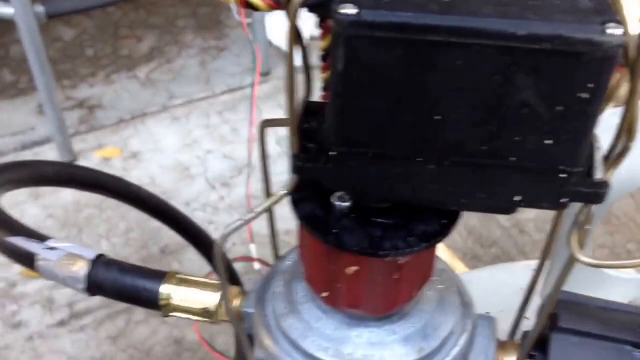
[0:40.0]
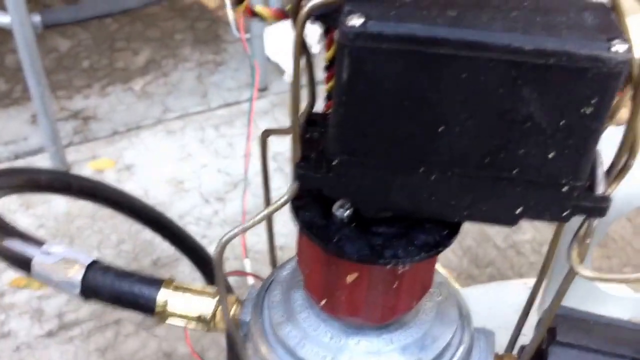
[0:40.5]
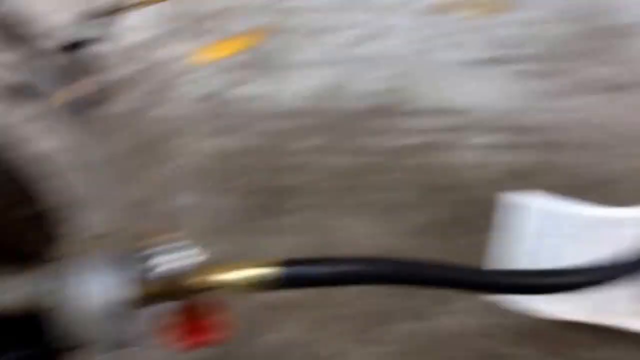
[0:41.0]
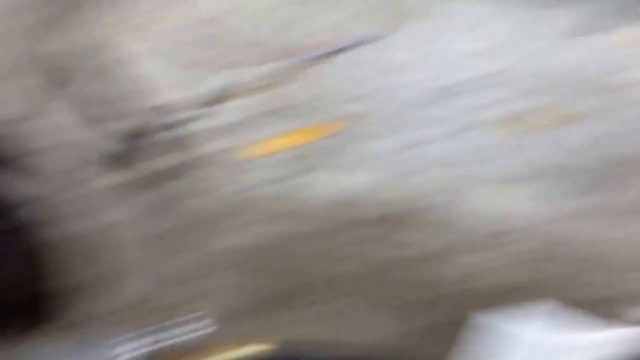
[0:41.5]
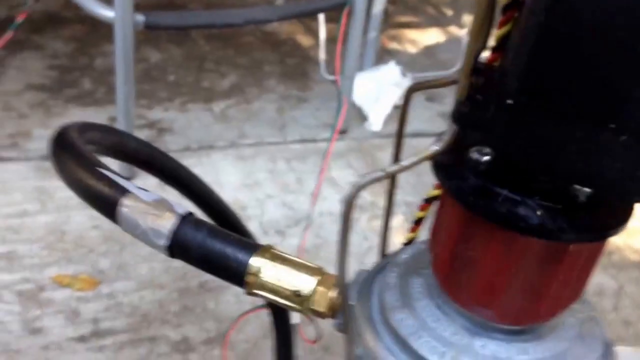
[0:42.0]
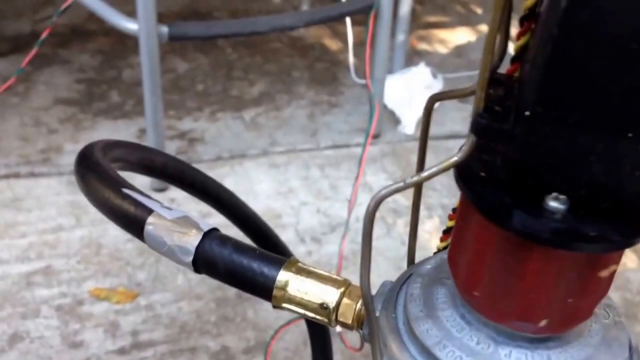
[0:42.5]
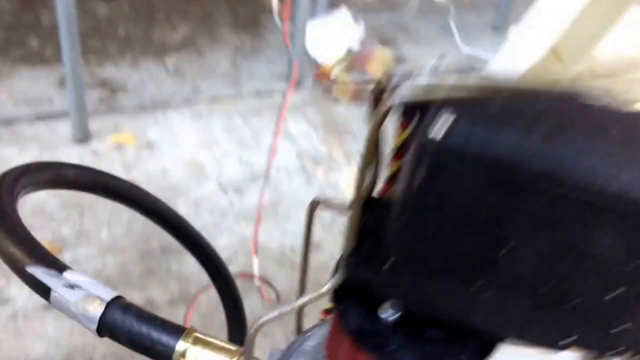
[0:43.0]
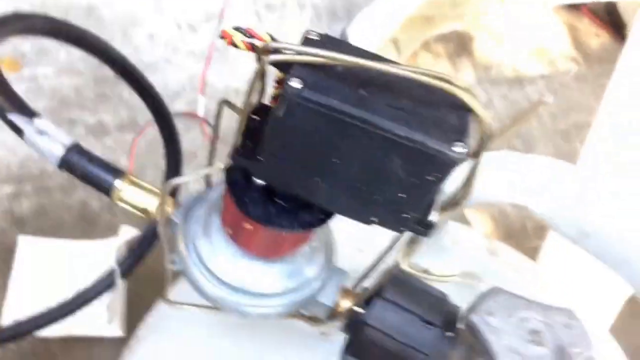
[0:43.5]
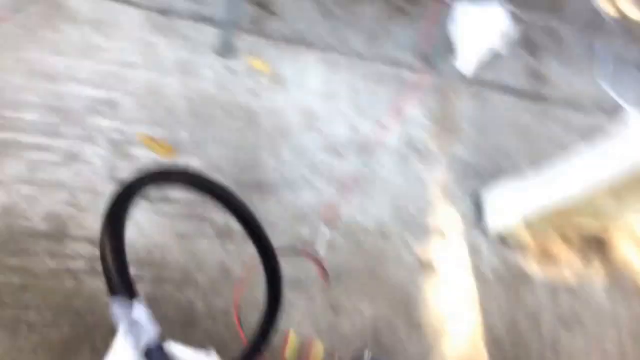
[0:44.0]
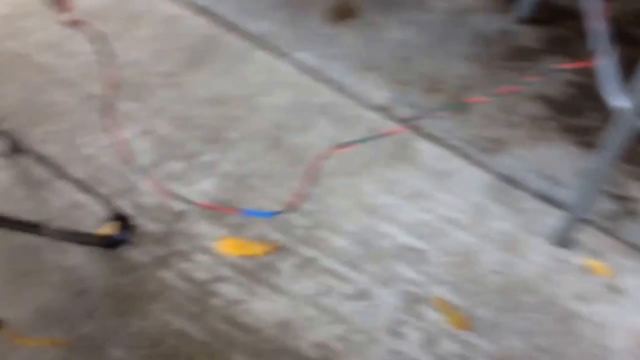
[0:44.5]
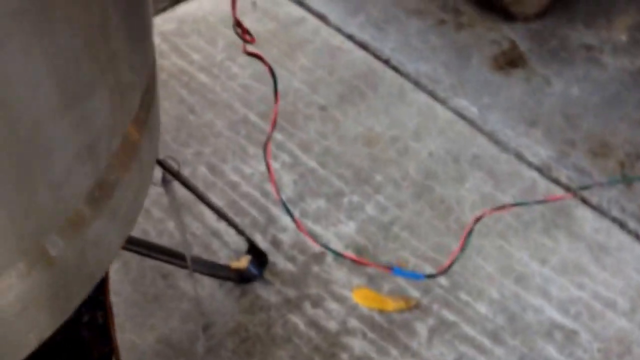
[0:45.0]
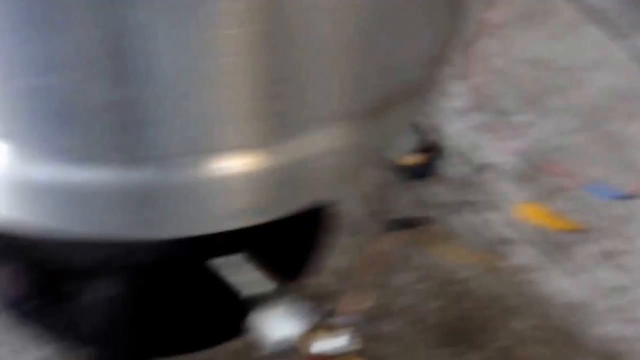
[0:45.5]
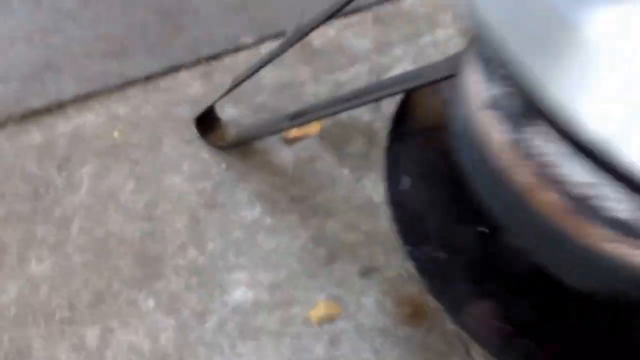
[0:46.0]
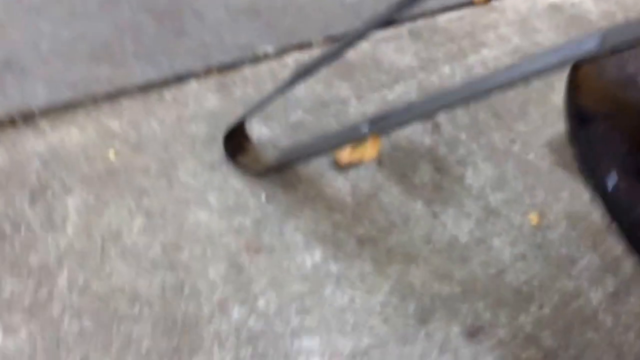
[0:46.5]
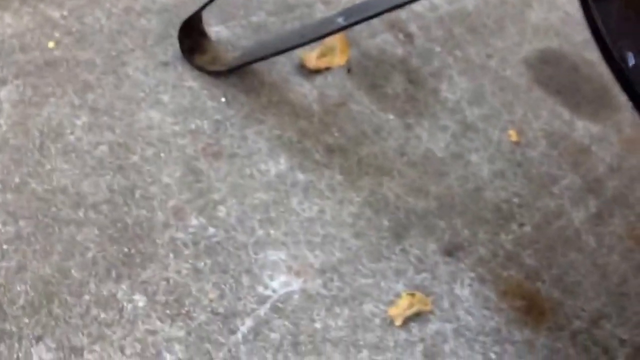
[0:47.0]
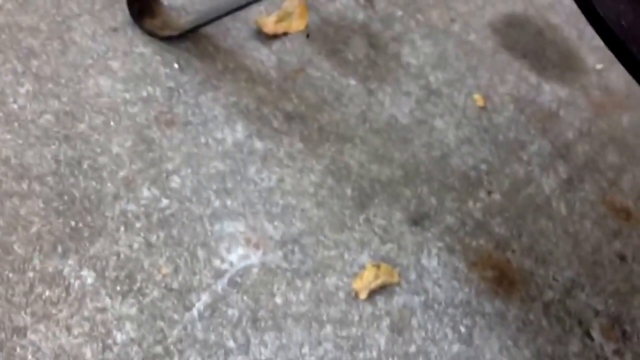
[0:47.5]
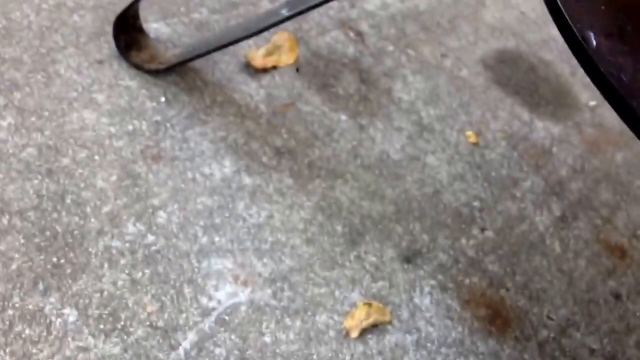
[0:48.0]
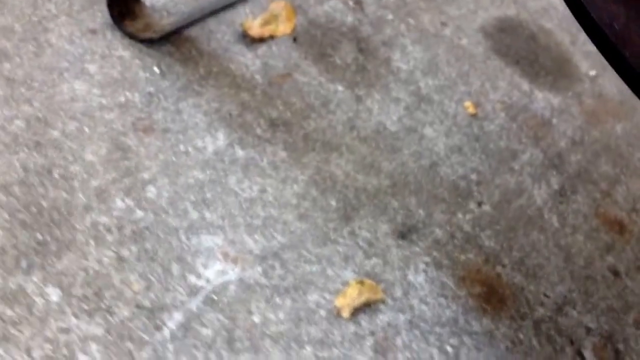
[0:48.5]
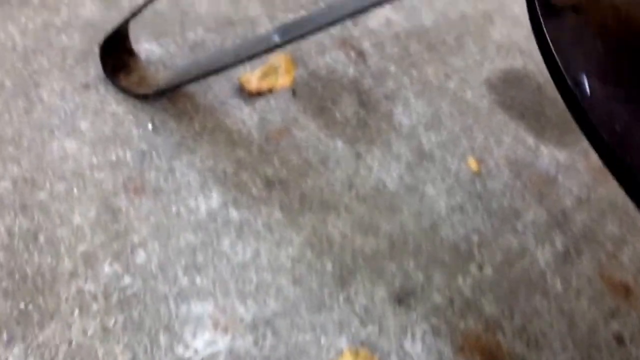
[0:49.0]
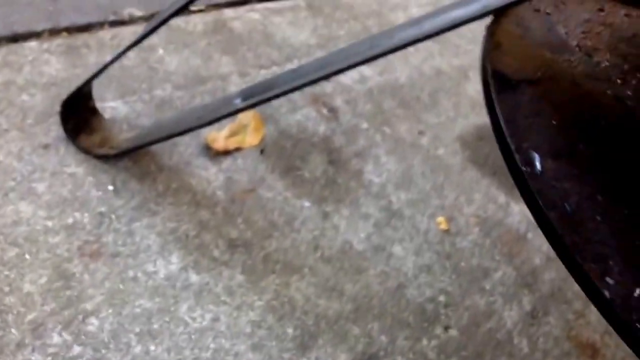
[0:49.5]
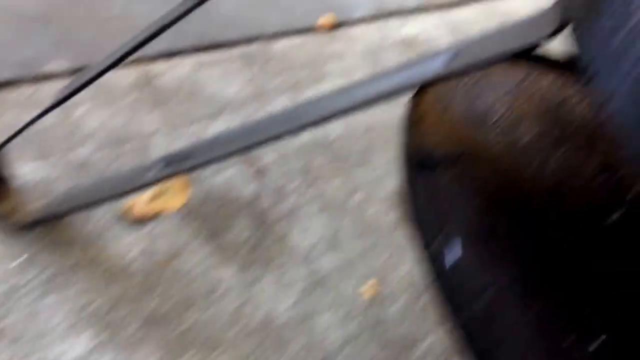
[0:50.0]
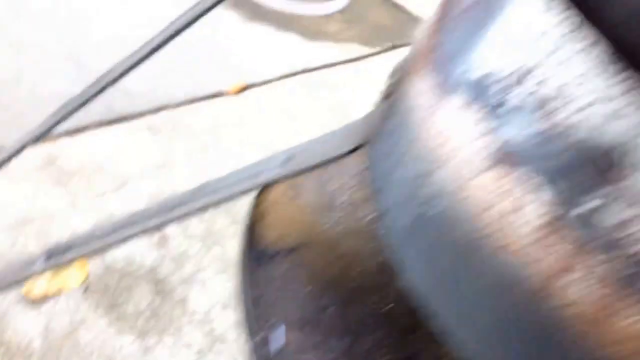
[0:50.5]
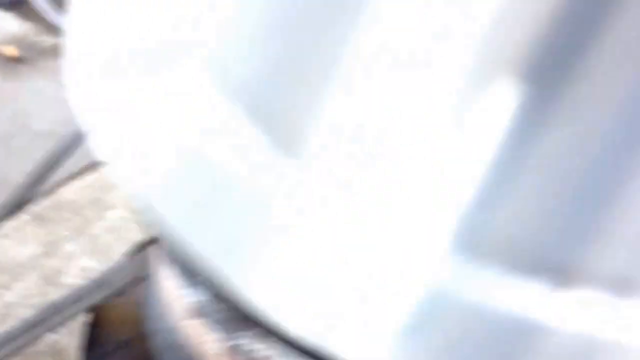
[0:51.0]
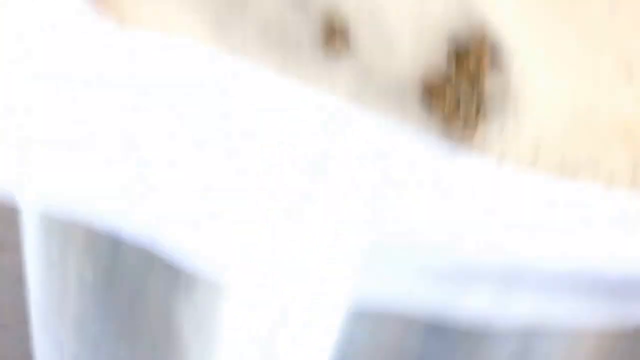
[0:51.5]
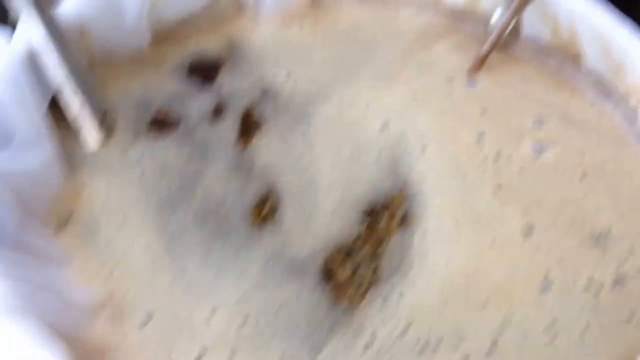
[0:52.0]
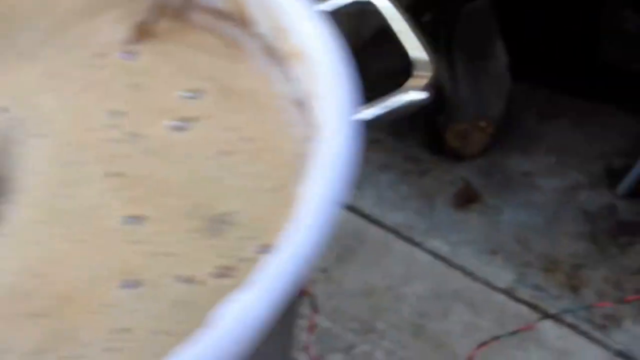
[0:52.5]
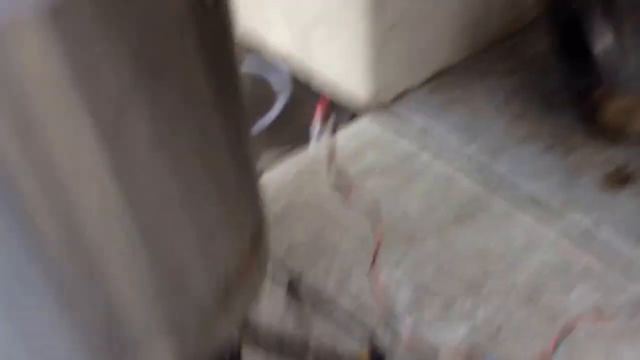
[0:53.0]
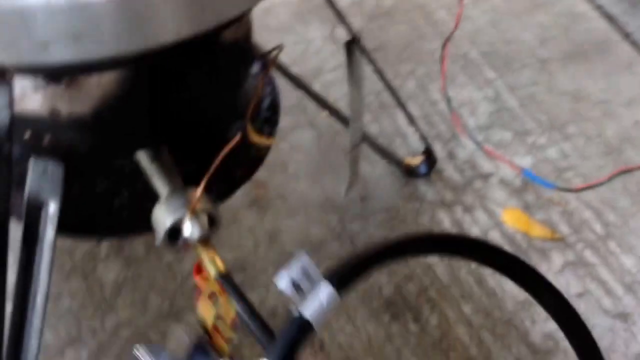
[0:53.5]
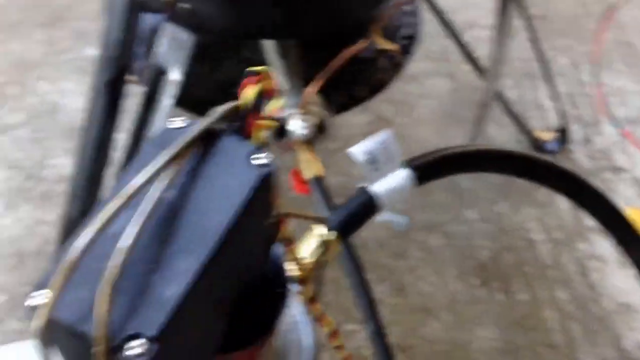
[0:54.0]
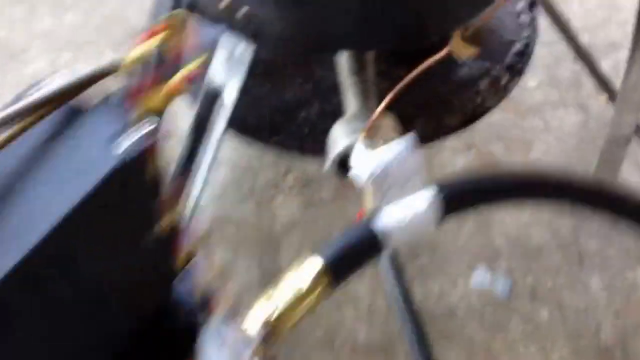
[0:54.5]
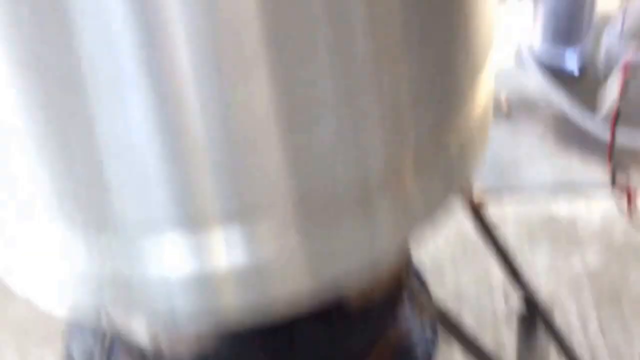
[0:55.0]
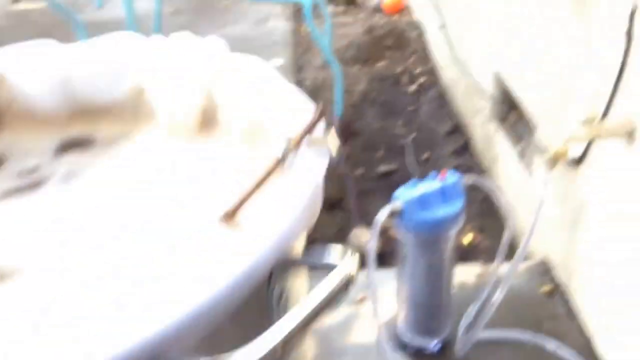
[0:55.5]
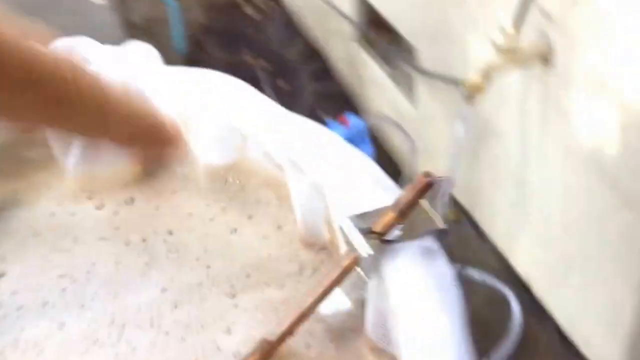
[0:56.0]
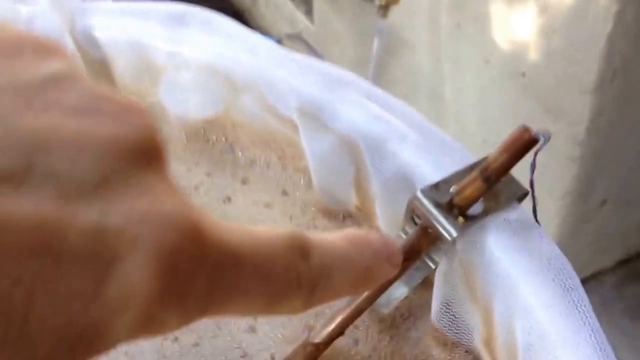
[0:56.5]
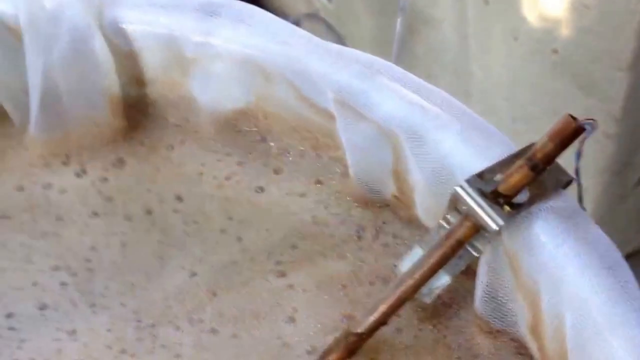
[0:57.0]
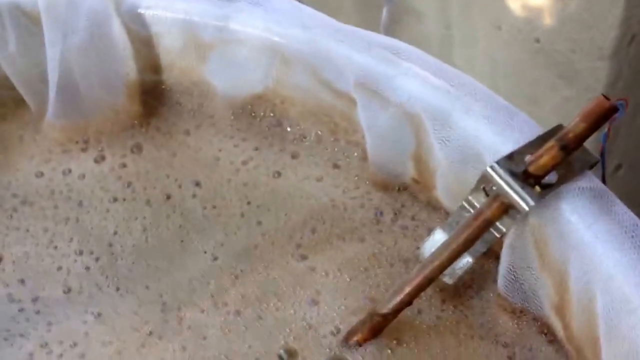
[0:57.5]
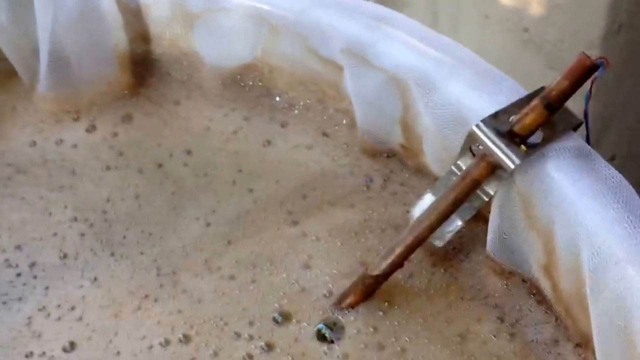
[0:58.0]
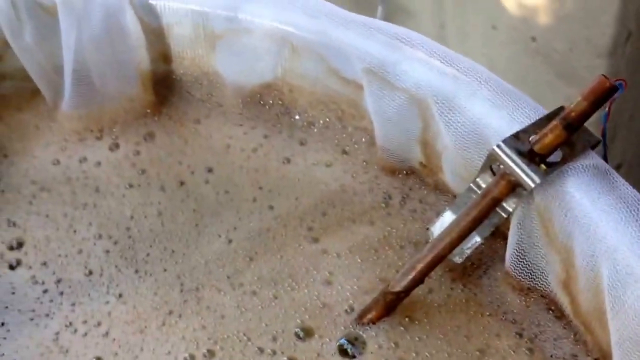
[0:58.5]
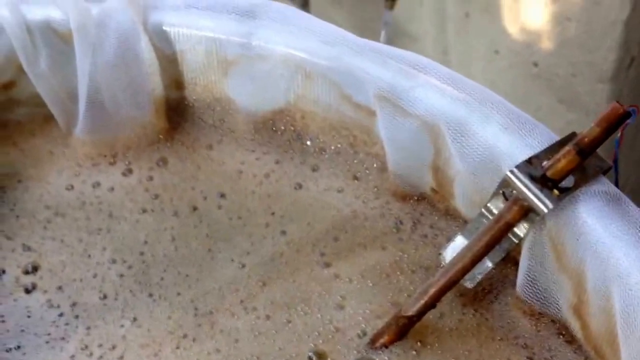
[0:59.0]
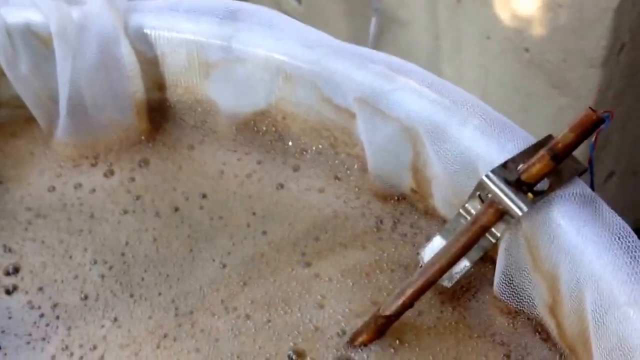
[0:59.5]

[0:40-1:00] The camera is zoomed in on a close-up of what appears to be some kind of electrical device attached to the valve of a gas canister. The camera pans, showing that the device appears to be turning the valve clockwise, and comes down to the base, showing the camping stove. Moving around the pan to get a good view, the camera operator points toward what appears to be a metal temperature probe attached to the side of the pan, which contains a brown liquid with white foam. The gas canister is attached via a black hose to a gas camping stove under the large metal pan. This appears to be some sort of mechanism to control the gas flowing into the stove electrically, apparently to achieve or maintain a certain temperature as measured by the thermometer in the brown liquid.